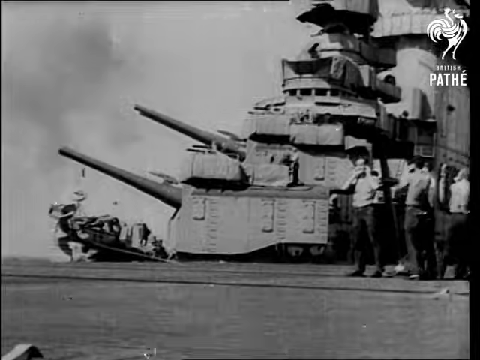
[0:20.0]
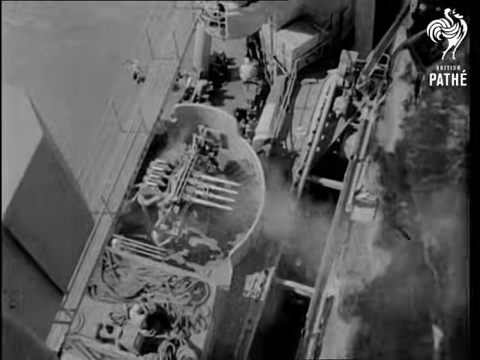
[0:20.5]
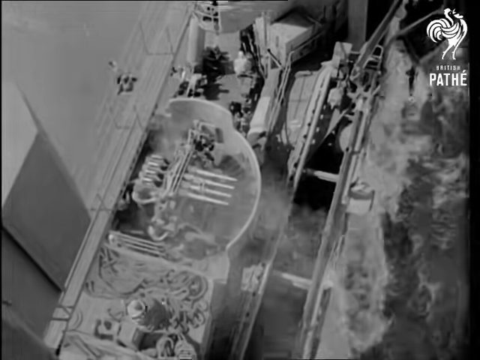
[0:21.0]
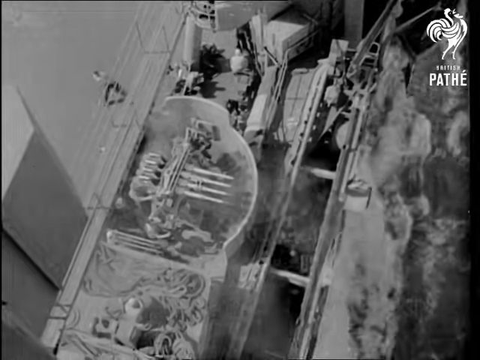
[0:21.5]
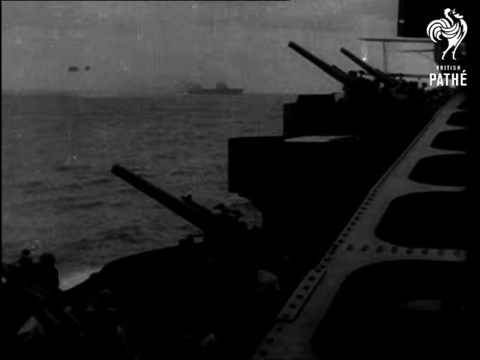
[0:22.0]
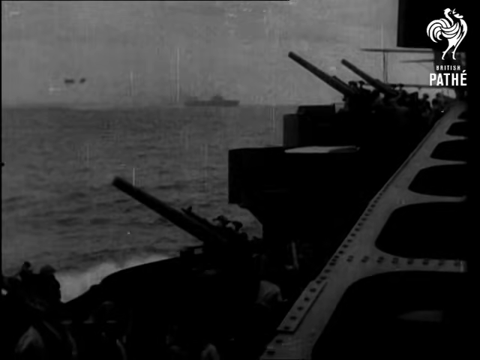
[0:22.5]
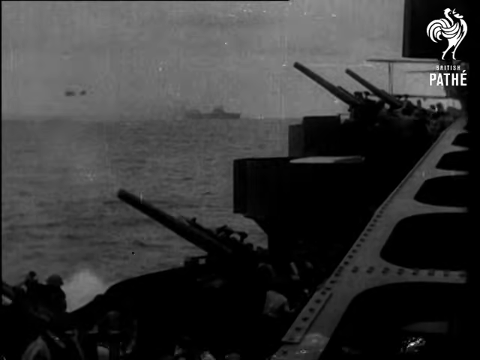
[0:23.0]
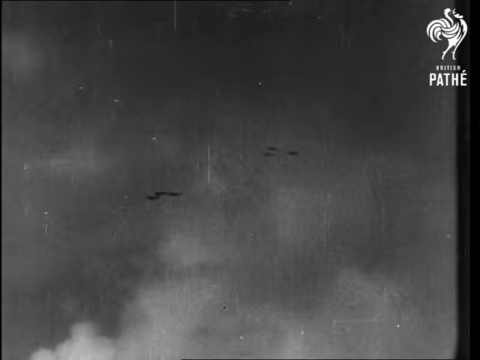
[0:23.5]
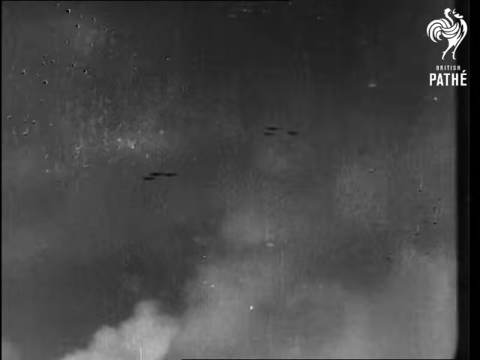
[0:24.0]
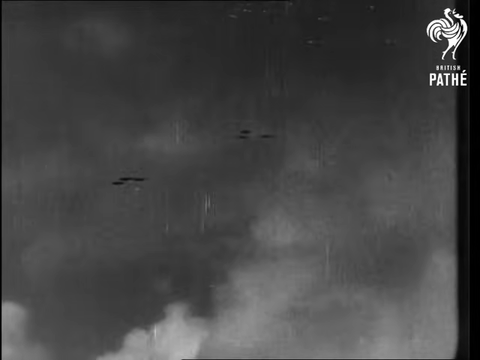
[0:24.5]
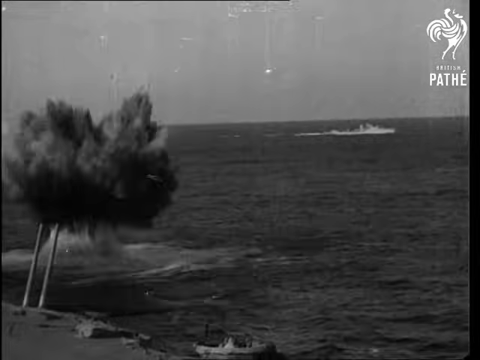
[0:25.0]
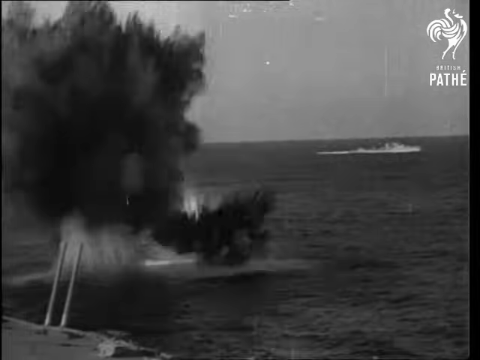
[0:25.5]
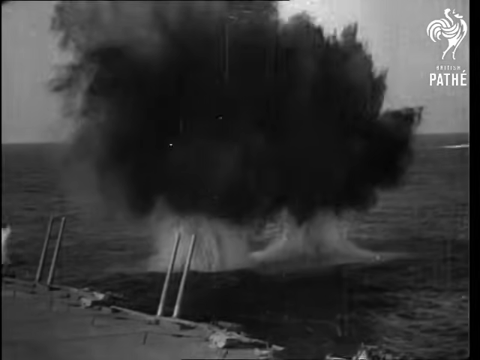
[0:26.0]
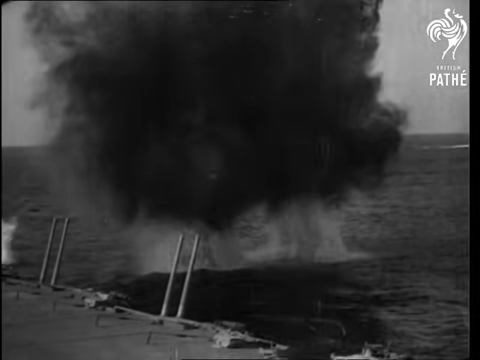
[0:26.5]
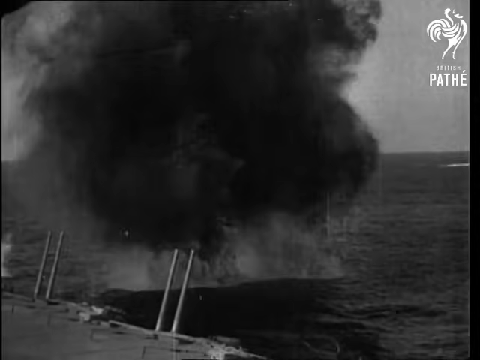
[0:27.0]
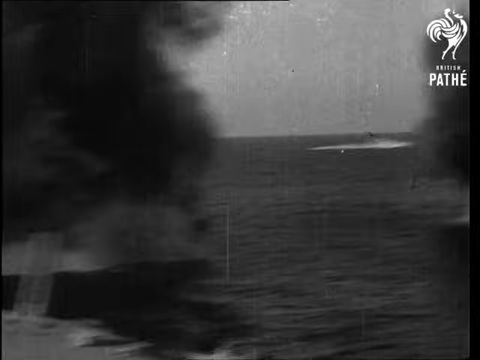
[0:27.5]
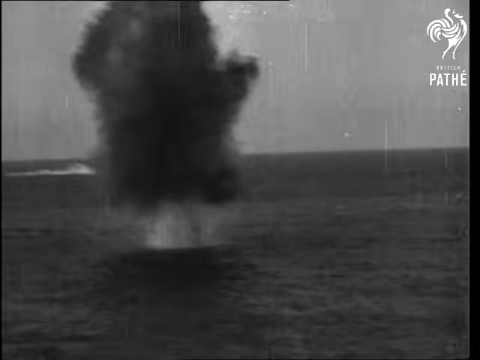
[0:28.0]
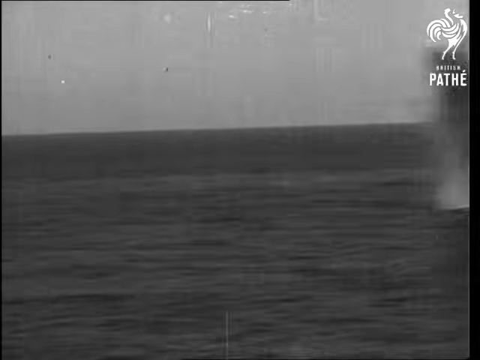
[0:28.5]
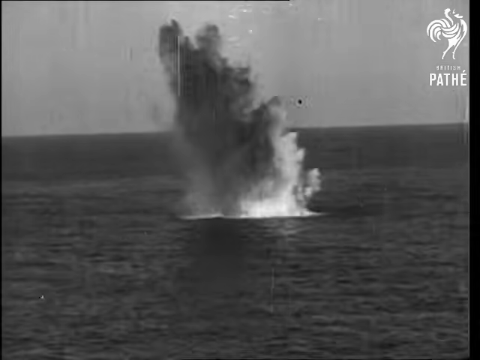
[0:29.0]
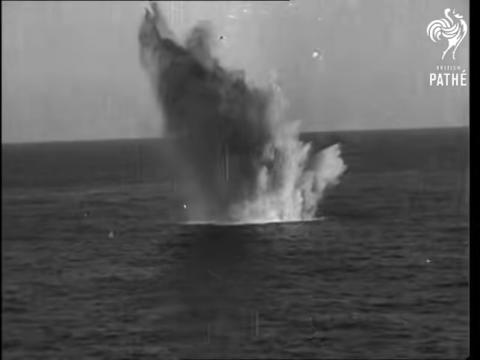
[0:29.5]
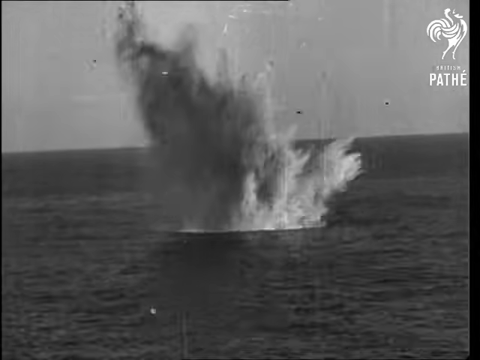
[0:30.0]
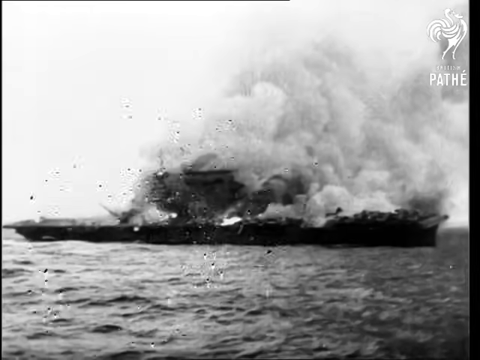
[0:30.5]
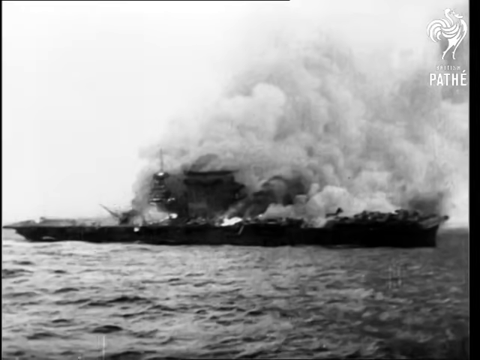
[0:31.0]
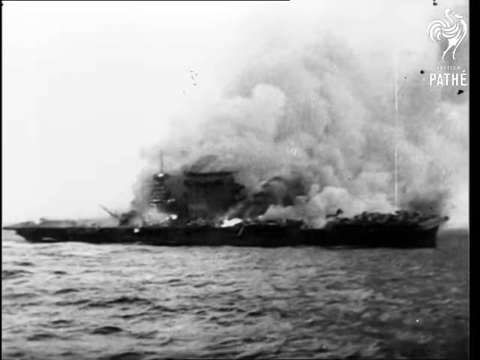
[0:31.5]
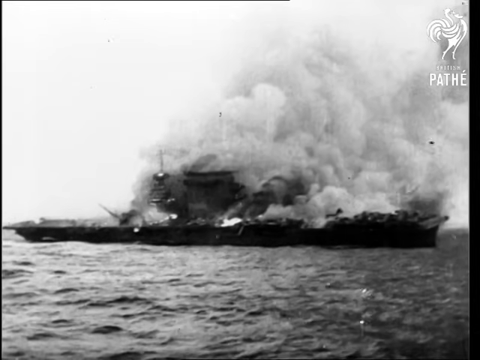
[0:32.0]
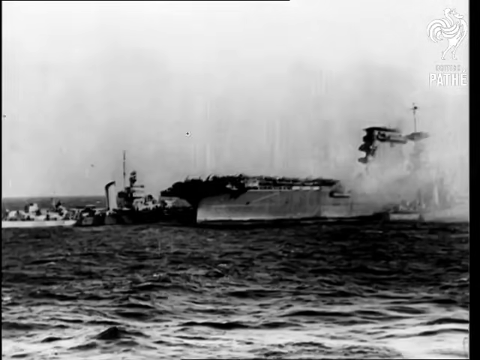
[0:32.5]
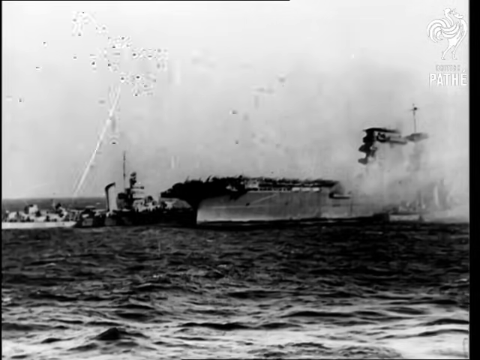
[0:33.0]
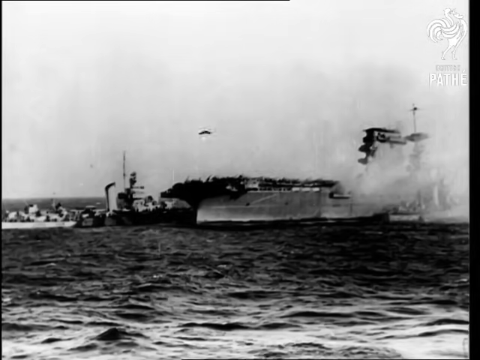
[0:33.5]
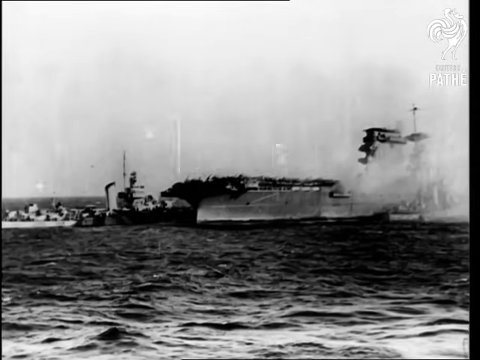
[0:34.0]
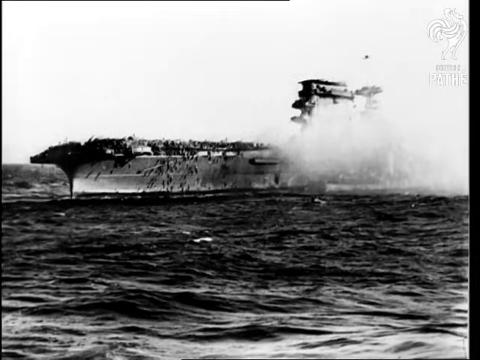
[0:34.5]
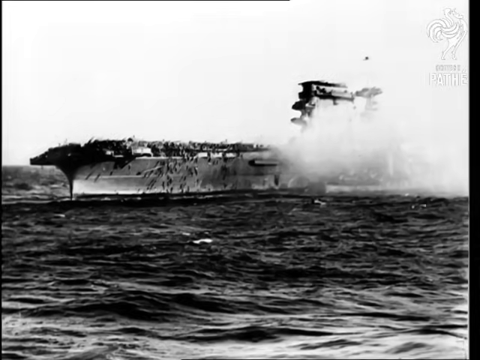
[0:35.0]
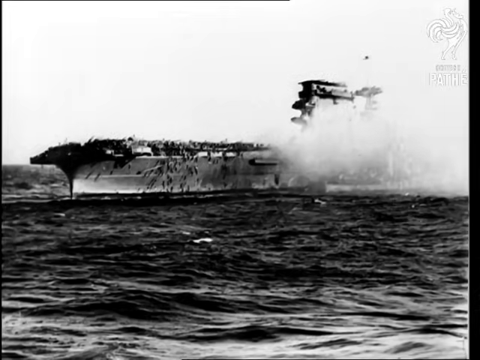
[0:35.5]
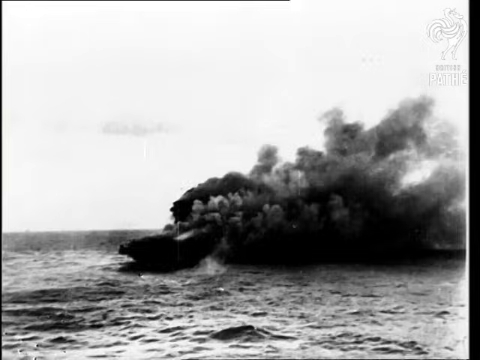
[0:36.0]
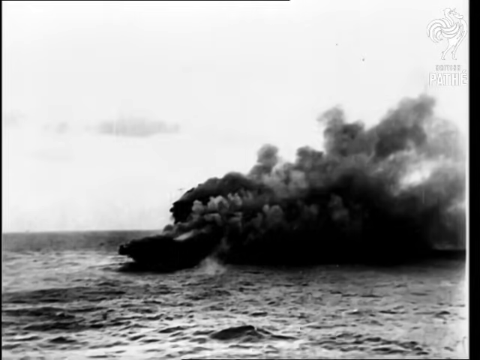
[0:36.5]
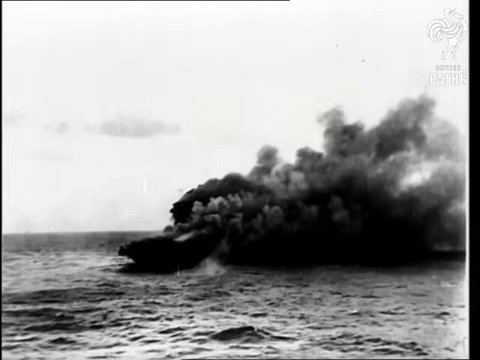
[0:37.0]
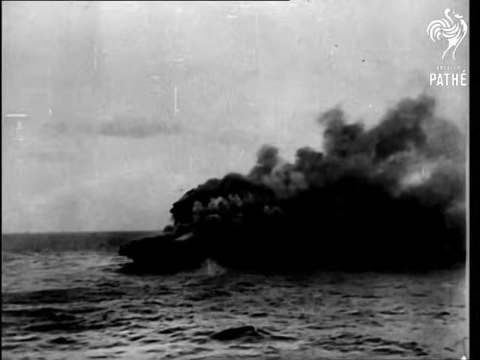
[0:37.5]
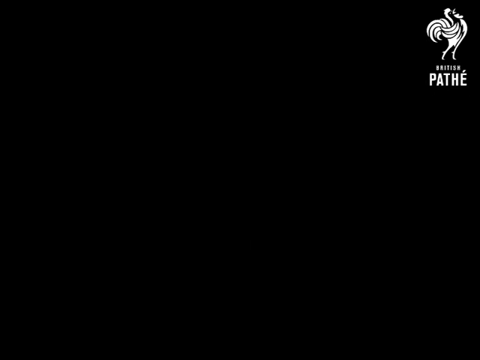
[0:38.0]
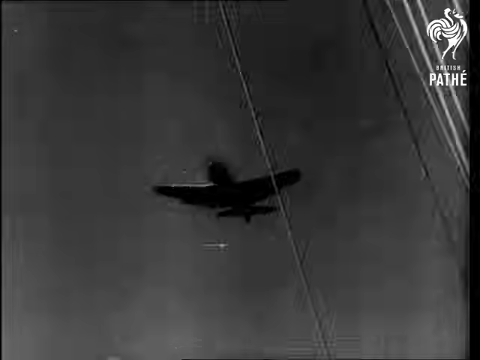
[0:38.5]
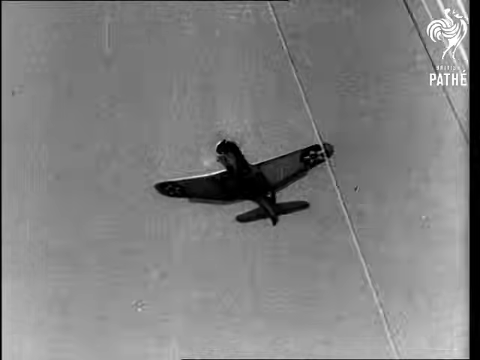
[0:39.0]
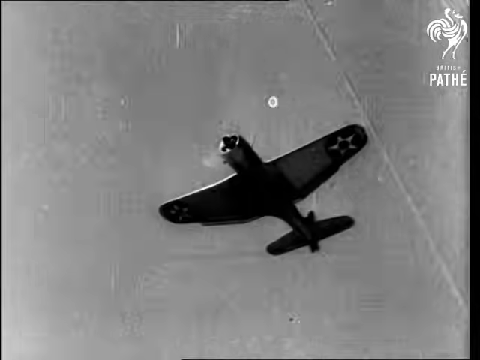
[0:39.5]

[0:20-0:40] The view appears to be on the surface of a battleship, where huge cannons face to the left, seemingly in two sets, one at the bottom and one at the top. In the background is what looks like a radio tower and other areas of the battleship. At the bottom right, around four or five people stand looking toward the left, and the foreground appears to be the battleship's deck. The scene changes to an aerial view of a smaller gun with four barrels pointing to the right, with water on the right side beside the ship and a crewman walking downward on the left side. The four-barrel gun fires rapidly, with what looks like smoke coming out of it. Another scene shows the side of a ship with visible rivets and what appears to be around three sets of cannons pointing upward at a 45-degree angle to the left, all firing with apparent smoke coming out of them, with the ocean or another carrier ship in the background. Next, the camera looks up at the sky at two sets of airplanes in triangle formation, one in front and two behind, flying from right to left. Another scene shows what look like explosions in the water in front of a ship, which is at the bottom left, with an explosion in the middle of the water; the video pans to the right, showing more explosions in the water. The video then shows the side of a ship with smoke coming out all over it and from the deck; it looks like it has been hit, and the ship seems to be moving from left to right in the middle of the frame. Another view looks down at the front of the ship from its left side, with what looks like smoke coming from the side and apparently many holes in the front. A further scene appears to show a lot of black smoke coming out of the water. Finally, the camera looks upward as an airplane flies from the bottom right to the top left, showing its underside as it passes over.